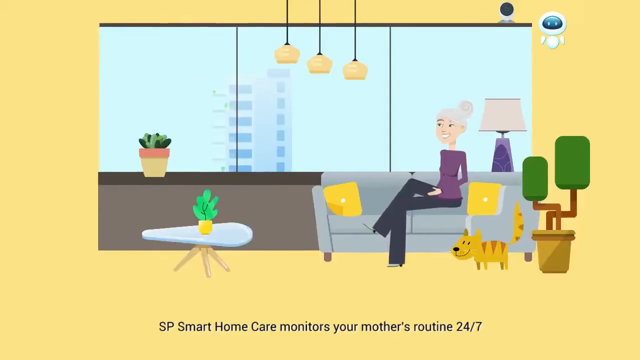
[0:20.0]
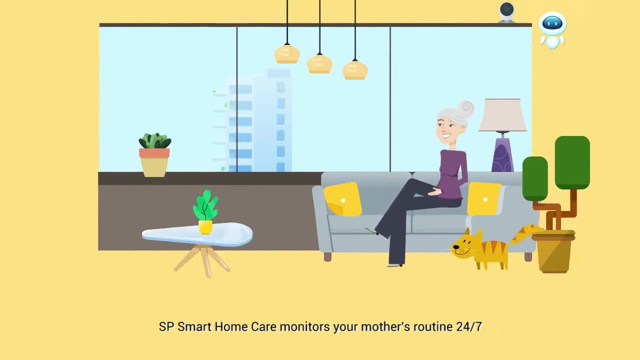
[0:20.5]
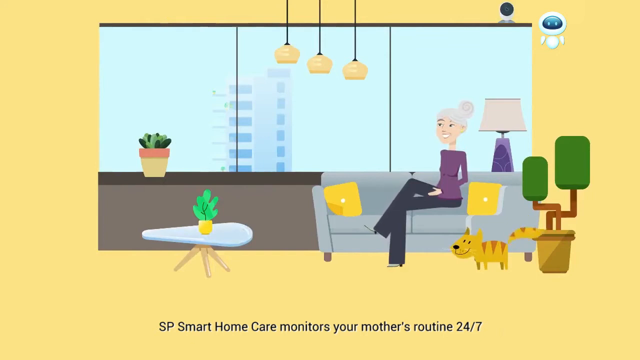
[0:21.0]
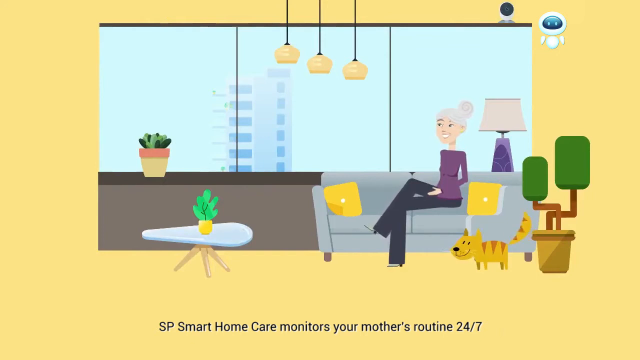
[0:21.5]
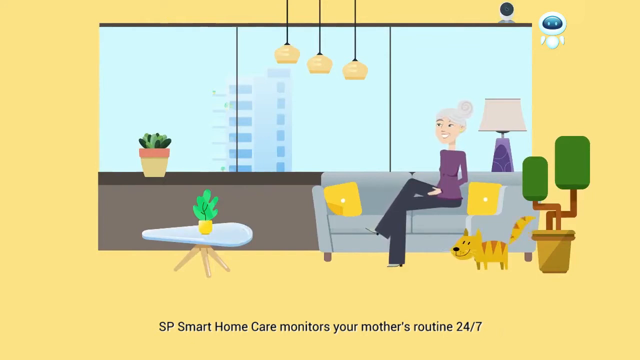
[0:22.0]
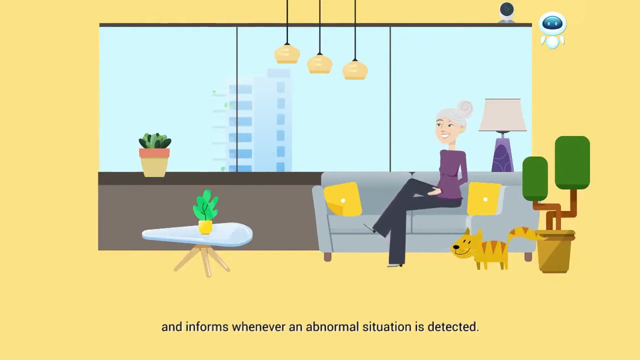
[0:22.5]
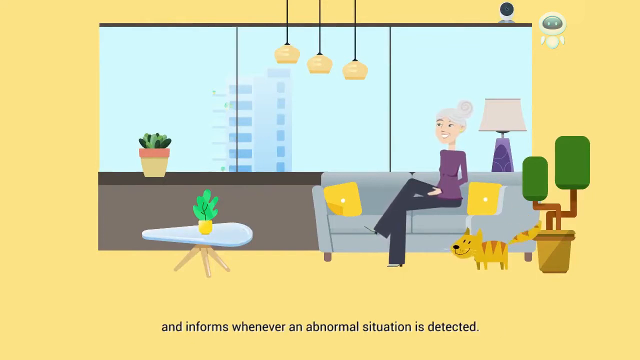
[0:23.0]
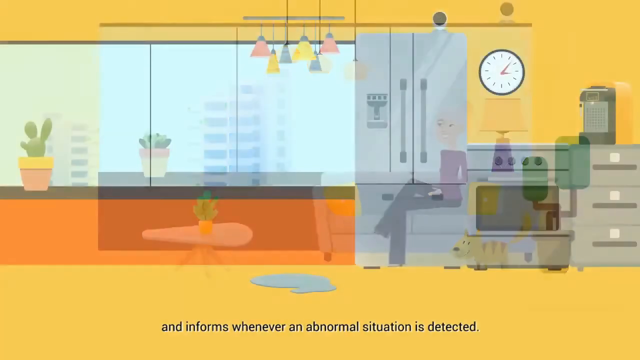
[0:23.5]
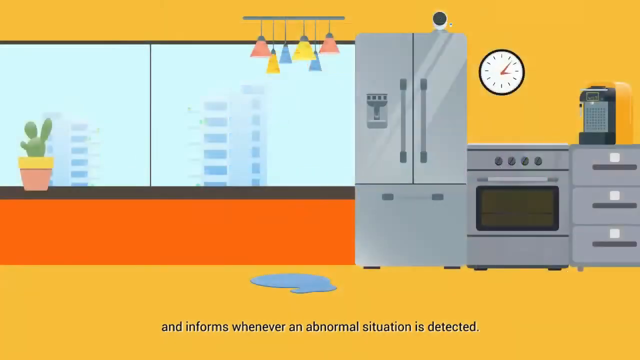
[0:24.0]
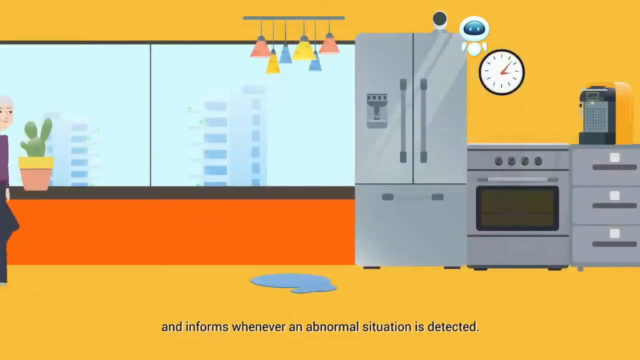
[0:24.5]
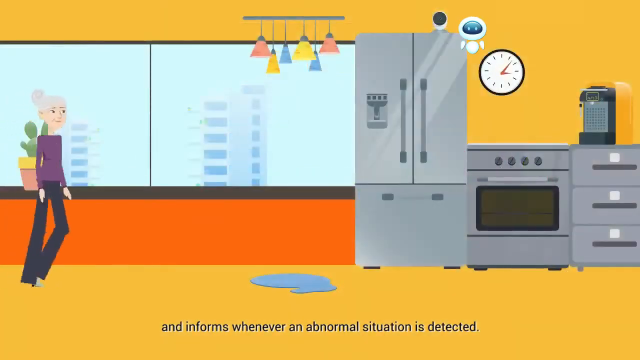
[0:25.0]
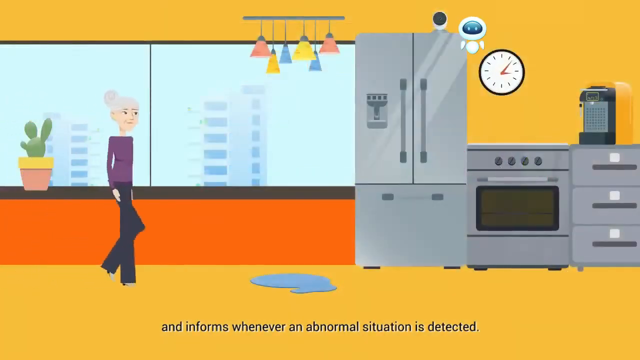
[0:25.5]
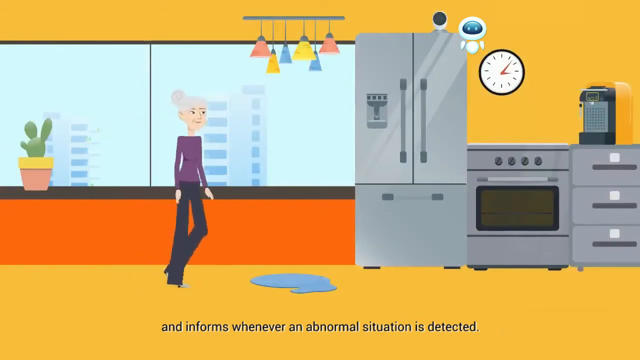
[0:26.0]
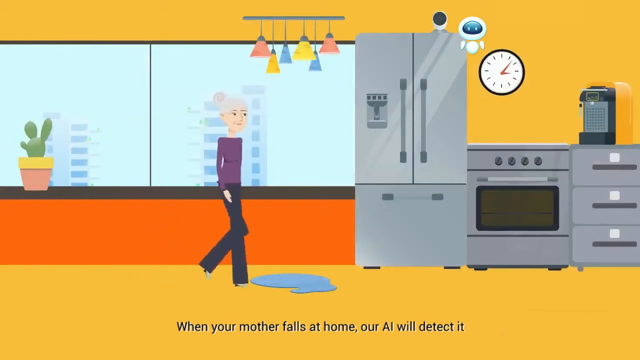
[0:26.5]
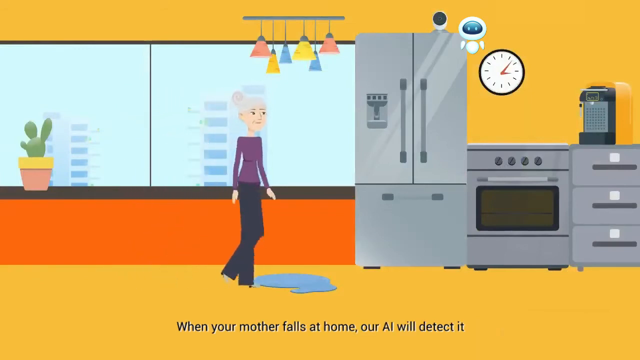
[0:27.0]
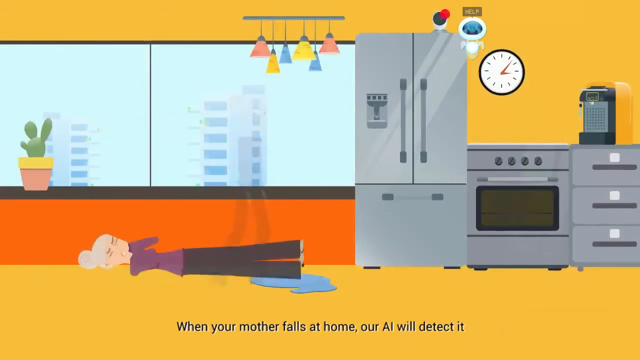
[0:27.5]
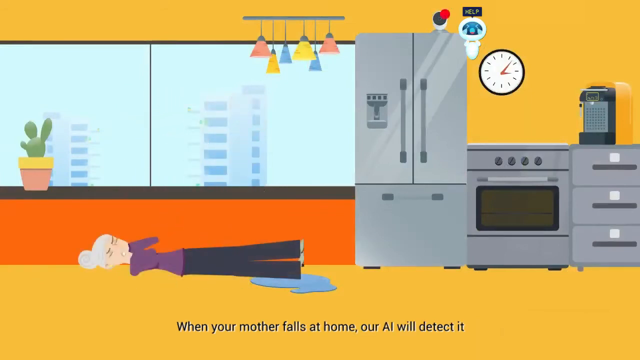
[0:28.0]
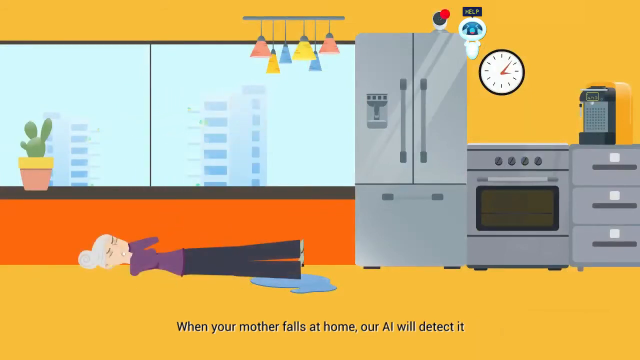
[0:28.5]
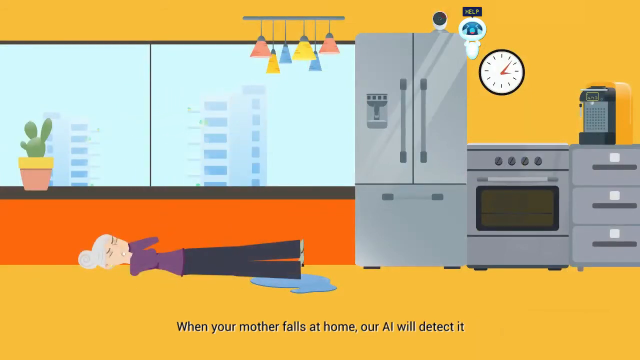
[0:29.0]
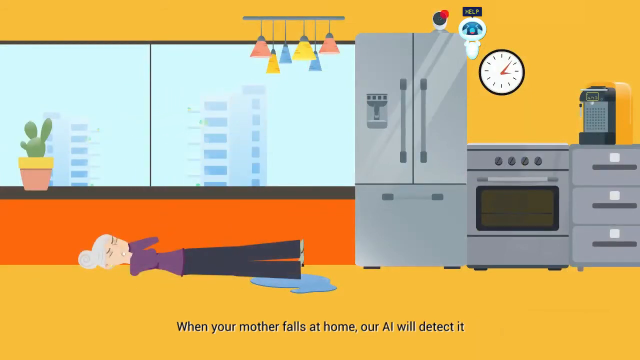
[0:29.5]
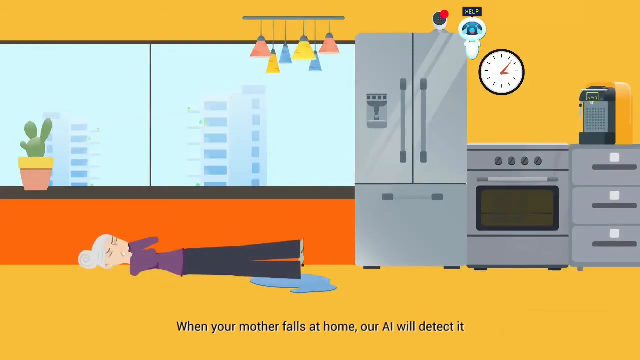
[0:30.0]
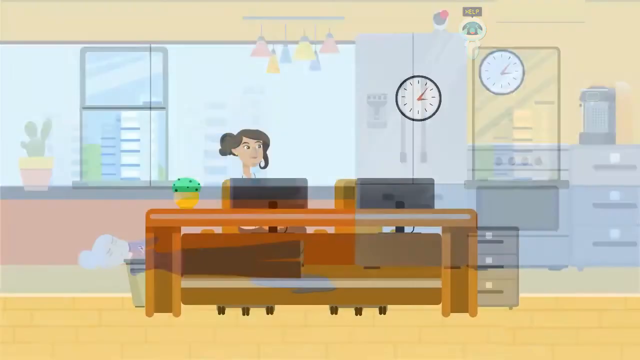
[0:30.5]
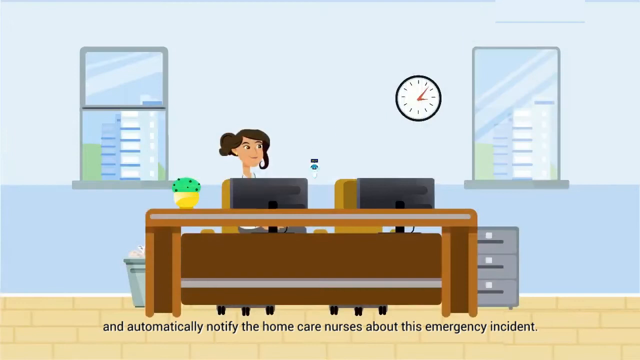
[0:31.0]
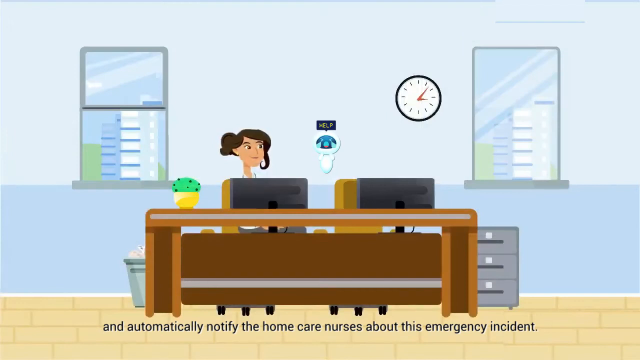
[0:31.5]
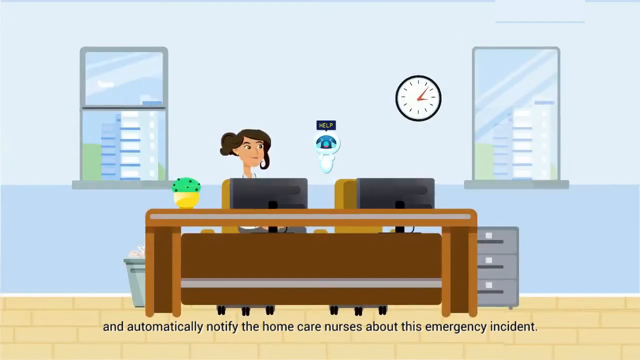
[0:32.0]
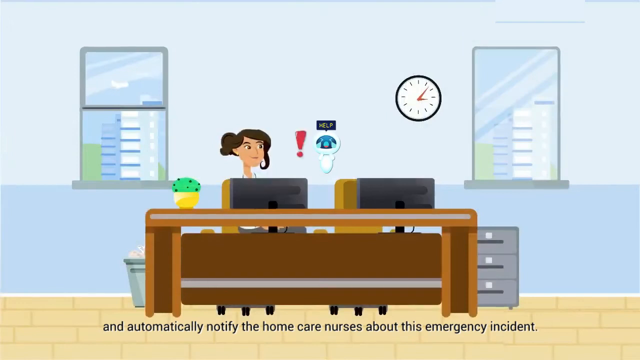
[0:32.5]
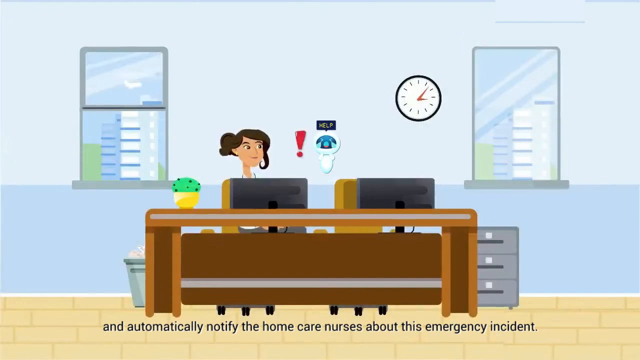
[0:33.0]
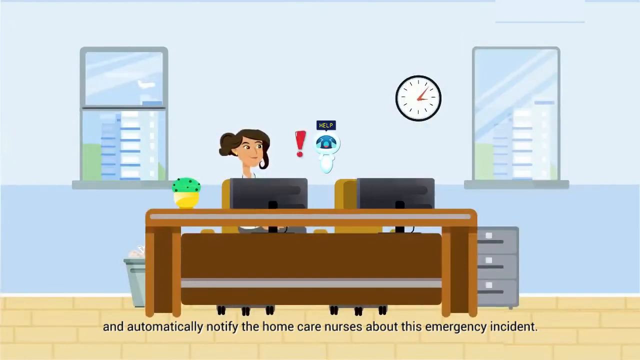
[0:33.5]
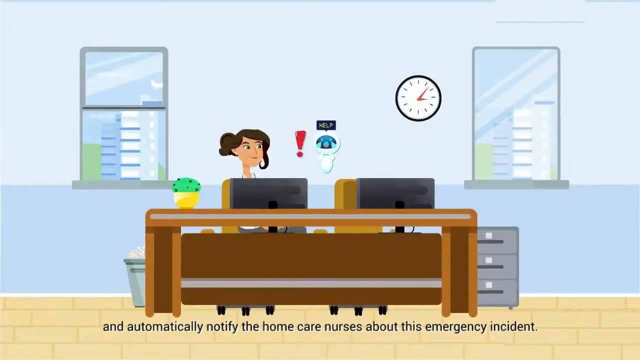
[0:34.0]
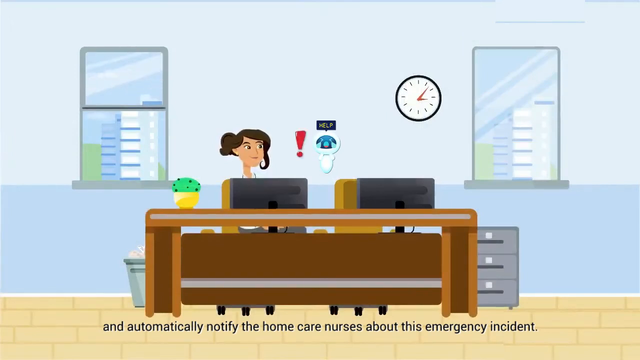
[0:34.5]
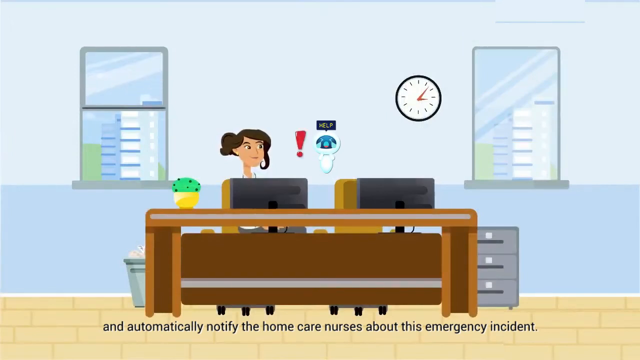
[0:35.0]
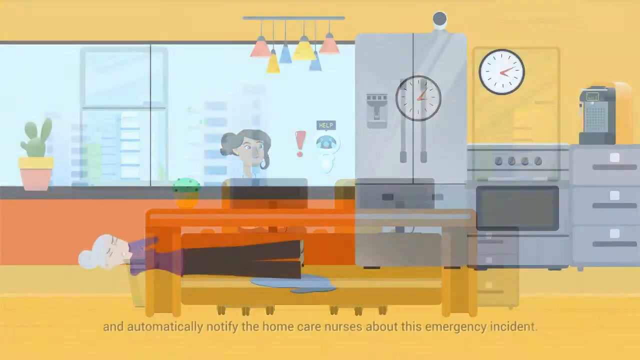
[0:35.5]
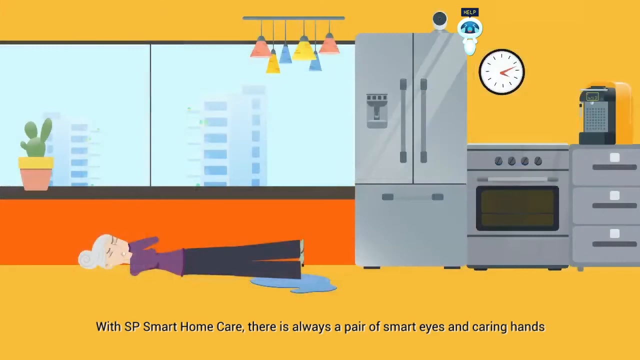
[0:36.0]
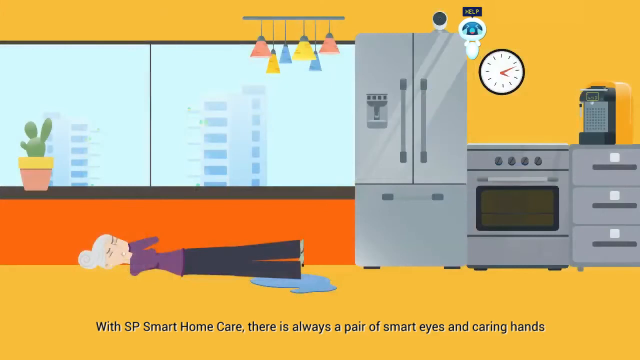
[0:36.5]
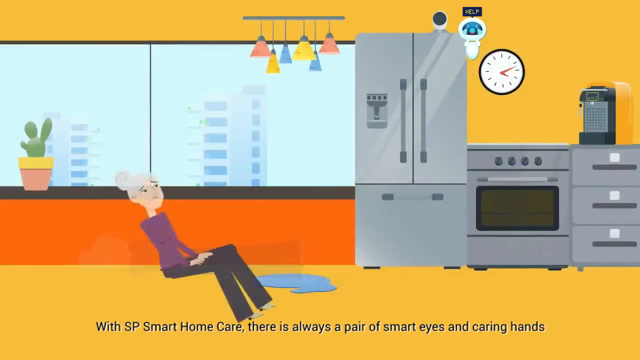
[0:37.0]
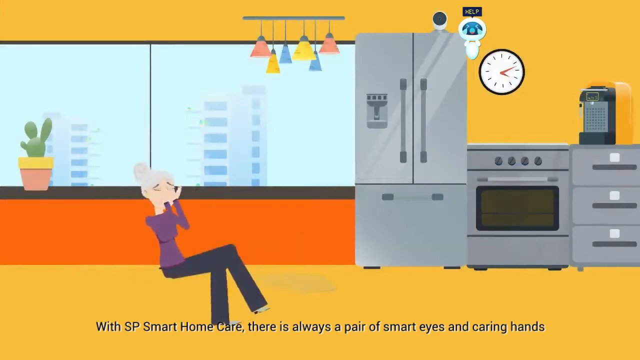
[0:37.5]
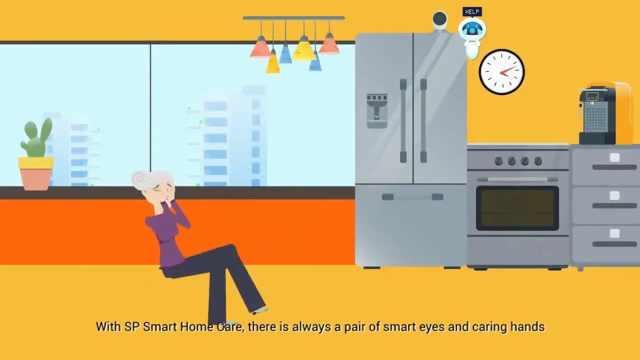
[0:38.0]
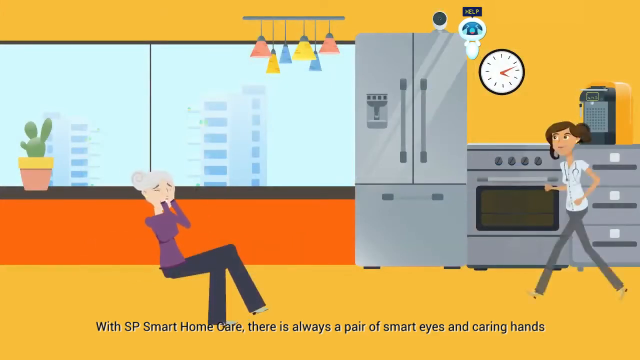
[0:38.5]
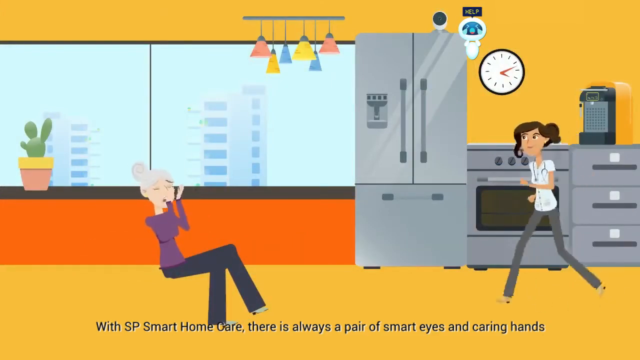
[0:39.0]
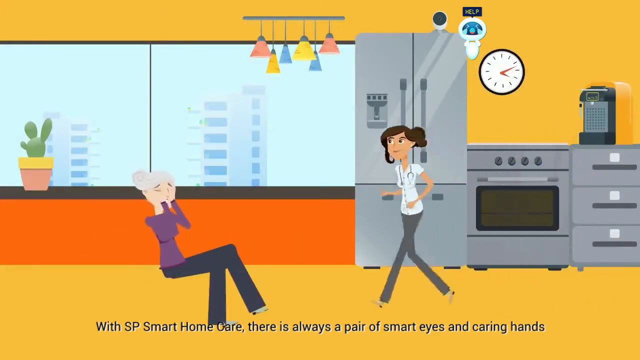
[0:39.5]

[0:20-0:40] In a cartoon image, a woman sits on her couch in a home setting with a small animal beside her. She is smiling, and text at the bottom says "SP Smart Home Care monitors your mother's routine 24-7". An image of a kitchen with a small spill on the ground follows, while the bottom text changes to "and informs whenever an abnormal situation is detected." The woman walks into the spill and is then seen lying on the ground. The text at the bottom reads "When your mother falls at home, our AI will detect it. And automatically notify the home care nurses about this emergency incident." A woman sits at a desk in front of a computer in an office setting with an exclamation mark by her head. It cuts back to the woman in the home and shows a small robot saying help. The woman leans up, seemingly in distress, and the text says "With SP Smart Home Care, there's always a pair of smart eyes and caring hands." A woman runs in to help the older woman on the ground.